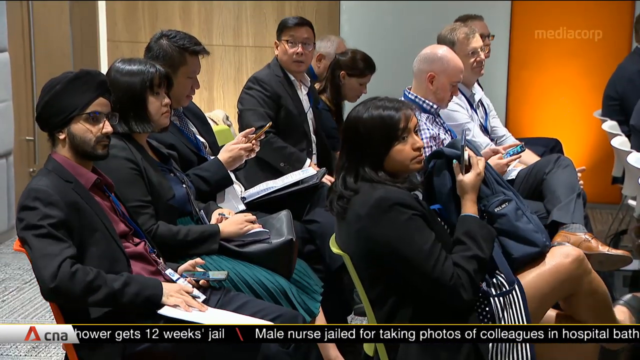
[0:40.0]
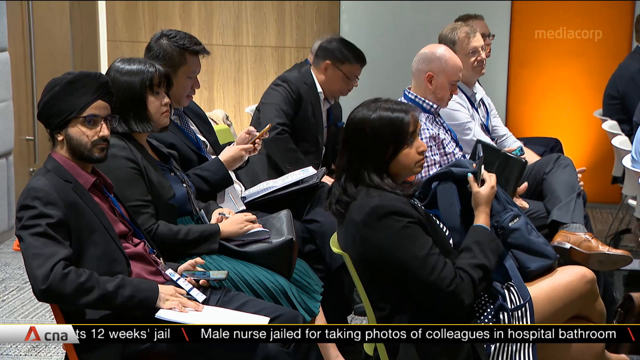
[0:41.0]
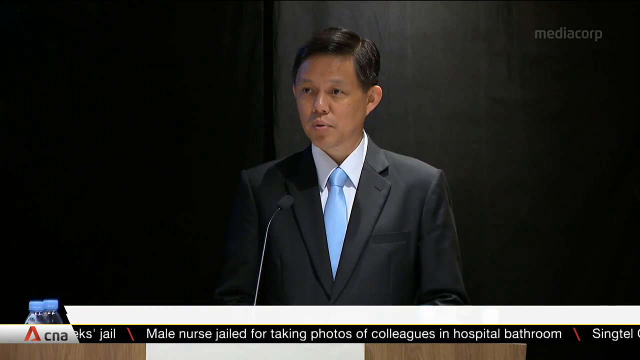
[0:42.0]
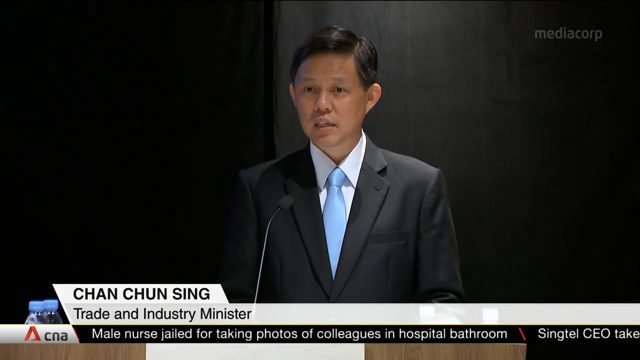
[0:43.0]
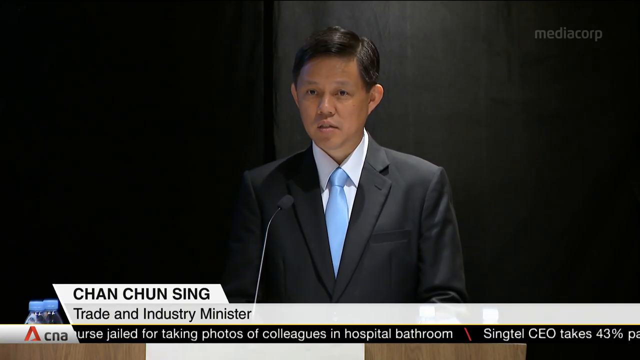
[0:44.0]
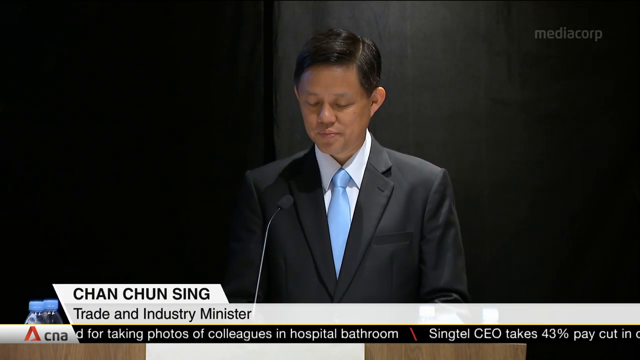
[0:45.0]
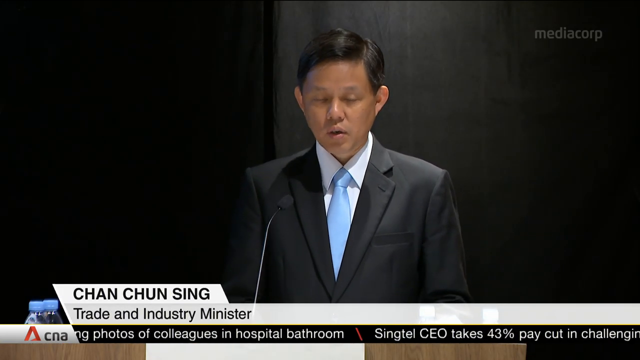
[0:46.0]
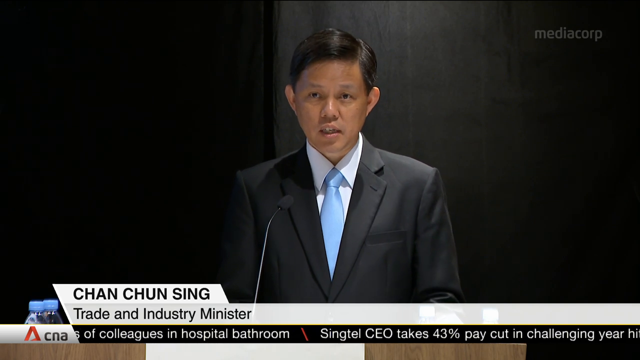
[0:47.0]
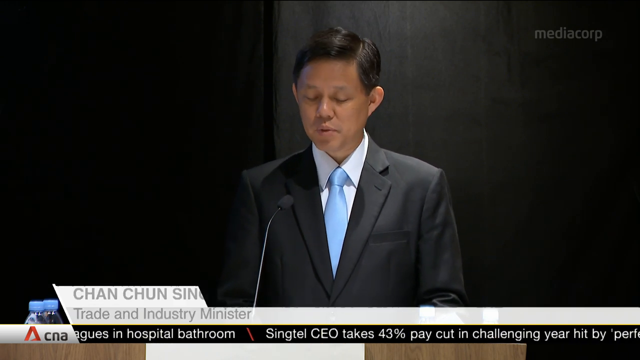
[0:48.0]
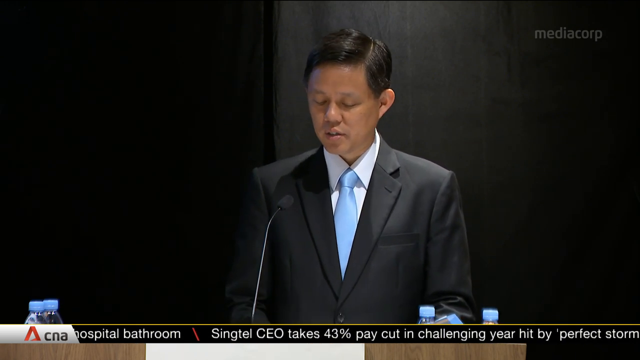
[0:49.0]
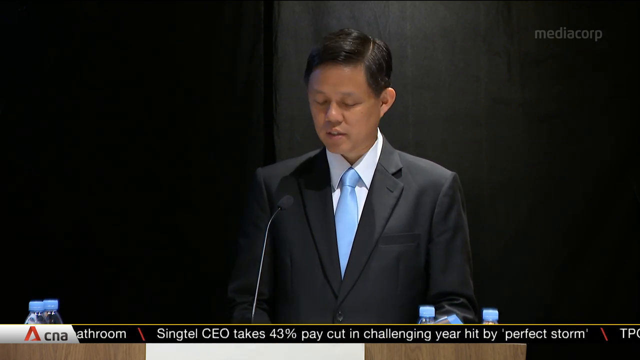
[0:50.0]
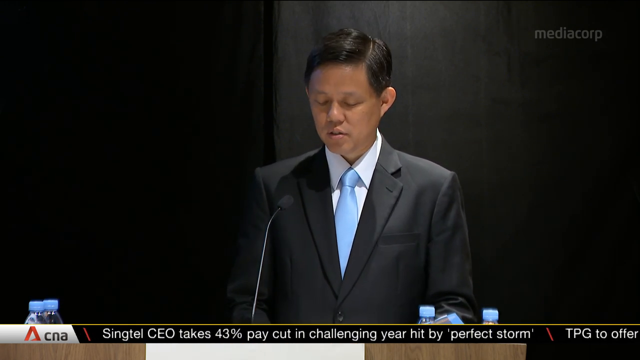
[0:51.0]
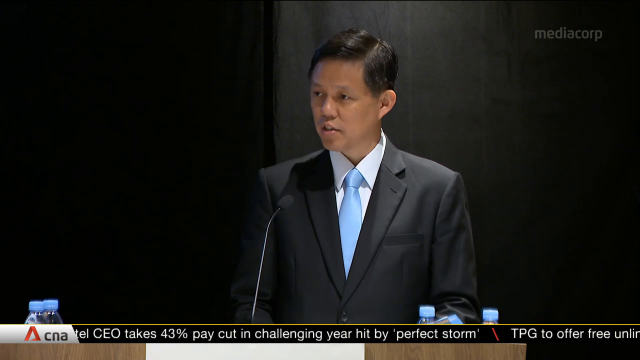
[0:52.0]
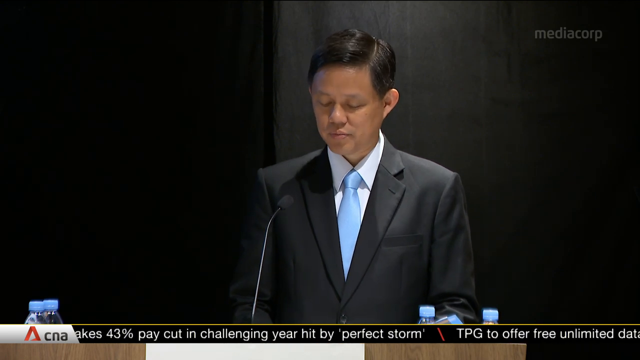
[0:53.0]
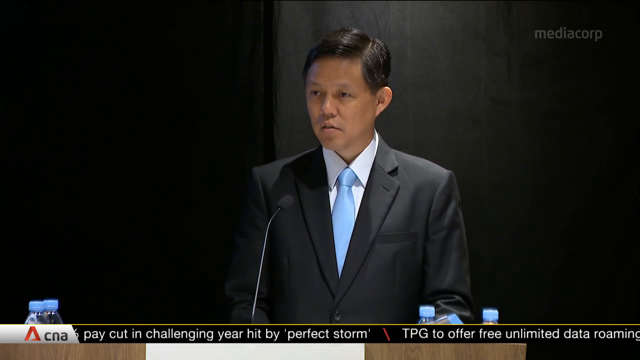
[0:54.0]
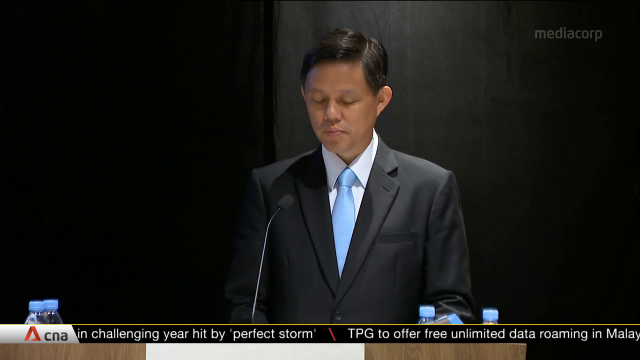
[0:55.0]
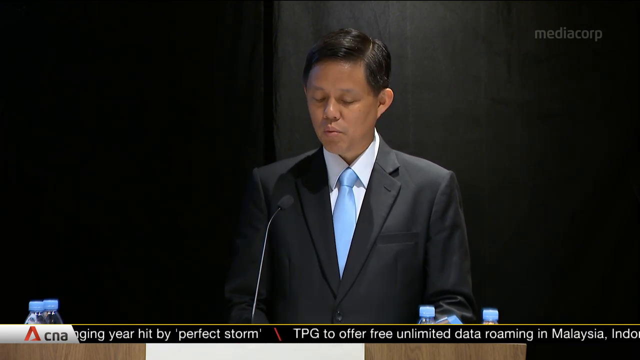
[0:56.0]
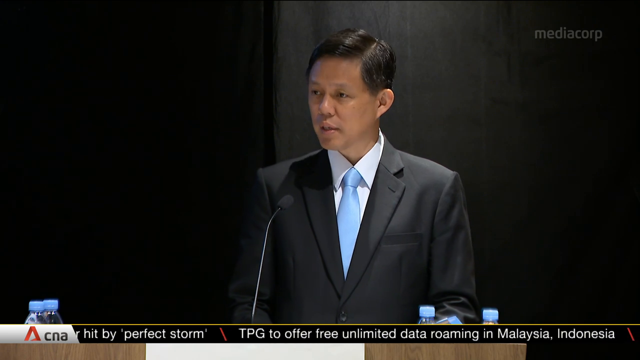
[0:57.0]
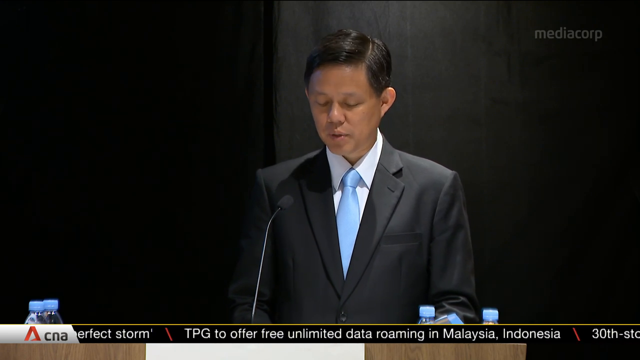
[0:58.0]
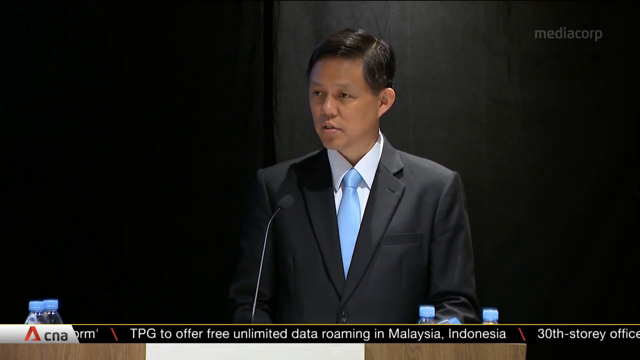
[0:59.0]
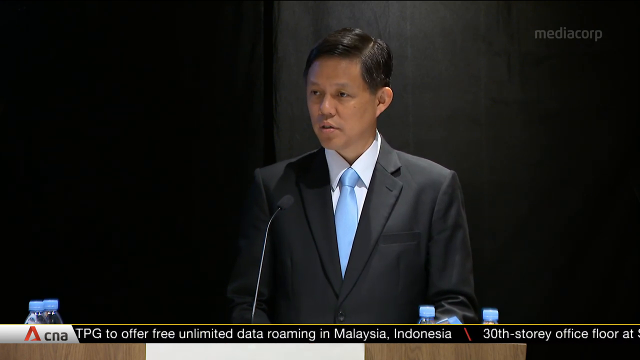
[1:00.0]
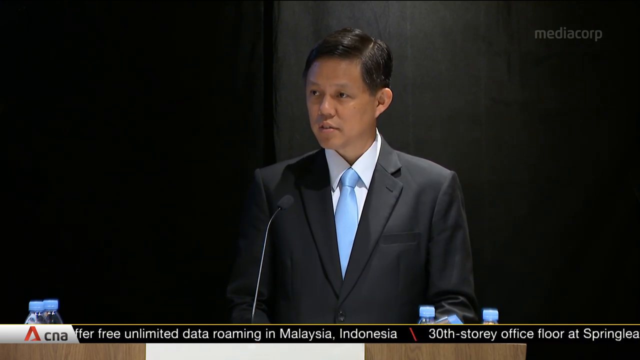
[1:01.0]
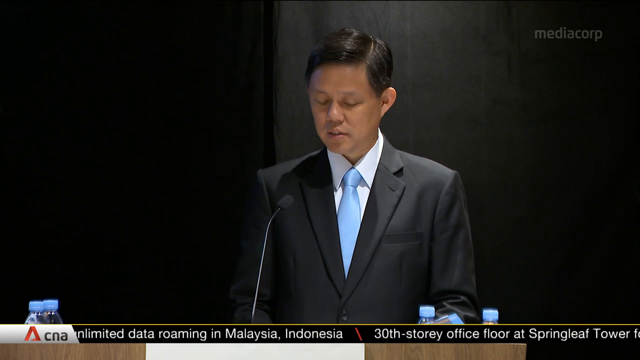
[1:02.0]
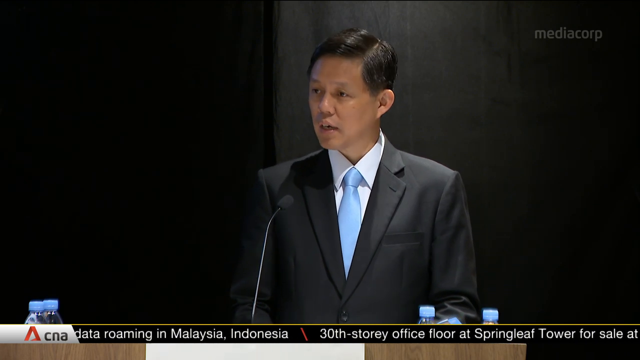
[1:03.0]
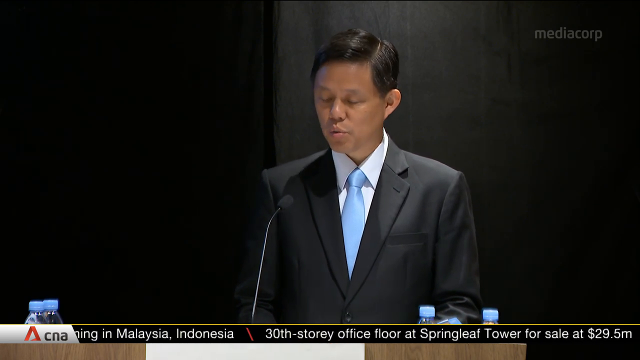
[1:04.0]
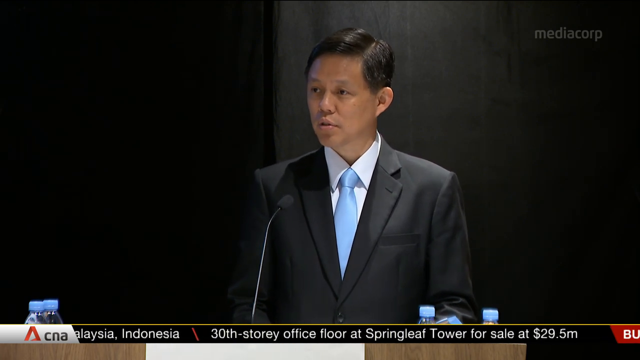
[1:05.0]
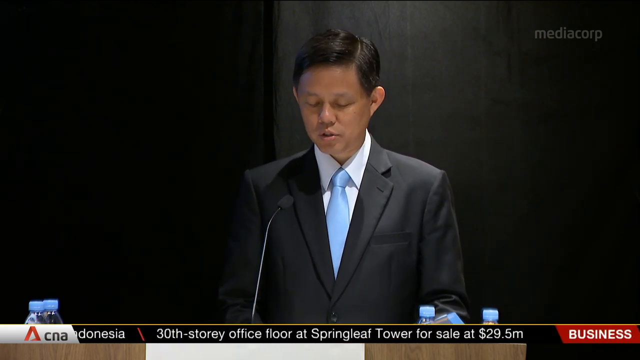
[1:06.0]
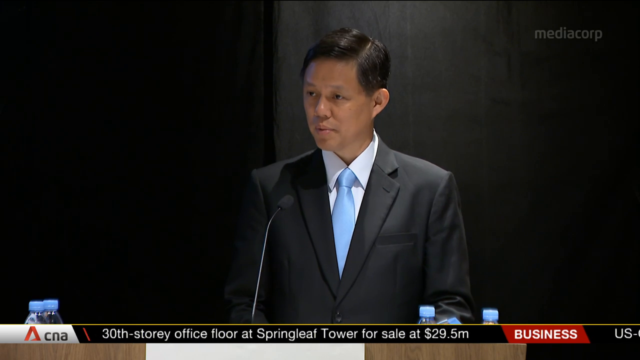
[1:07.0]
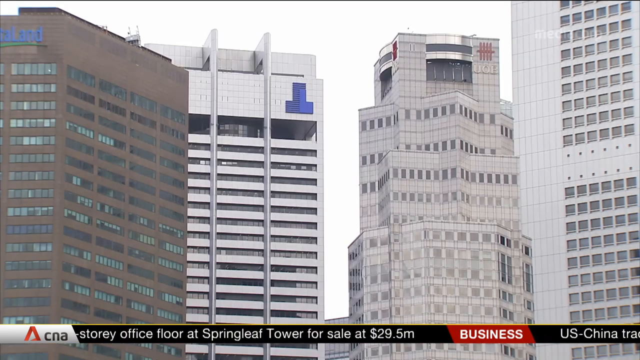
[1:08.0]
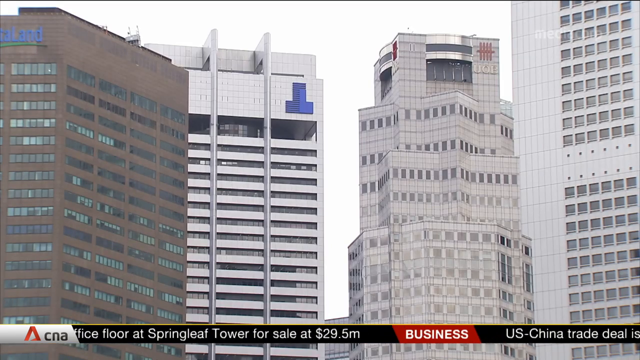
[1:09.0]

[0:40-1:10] The shot of rows of journalists cuts to a mid-close-up of the man who is speaking. A caption of two white straplines animates across the bottom of the screen: the first reads "Chan Chun Sing" and the line beneath reads "trade and industry minister". The man looks very serious, so much so that he looks quite sad, as he continues to address the room, occasionally making eye contact with journalists and speaking earnestly and quickly. He looks to be of Chinese descent, with very tidy, short black hair, and wears a black suit, white shirt and pale blue tie. Next is a shot of the tops of four skyscrapers: the one on the left is brown and the other three are white. They are close together and the skyline is crowded.